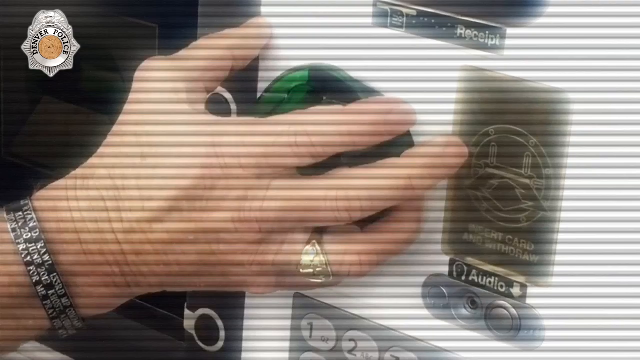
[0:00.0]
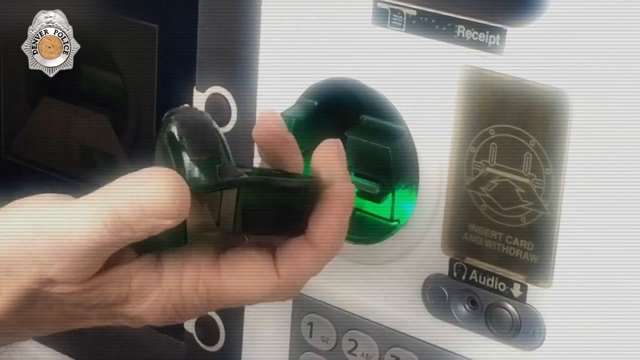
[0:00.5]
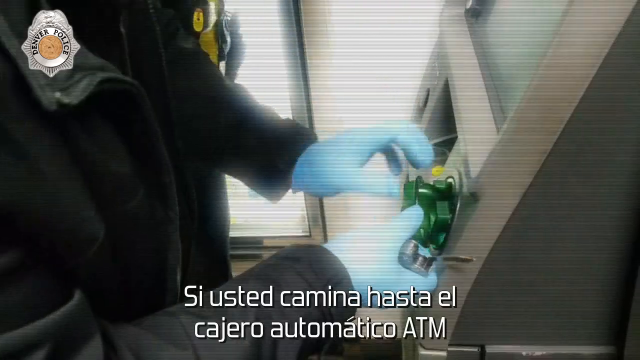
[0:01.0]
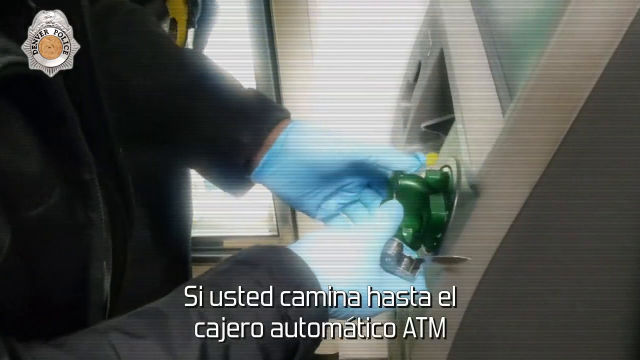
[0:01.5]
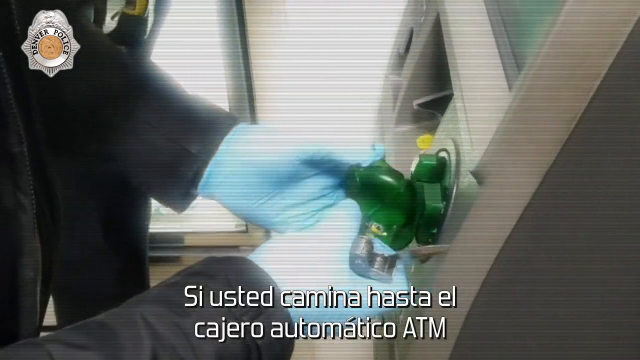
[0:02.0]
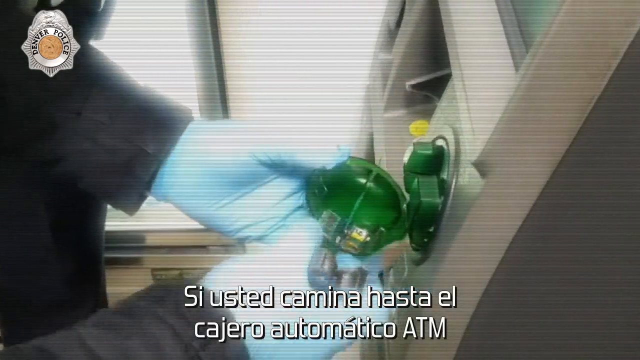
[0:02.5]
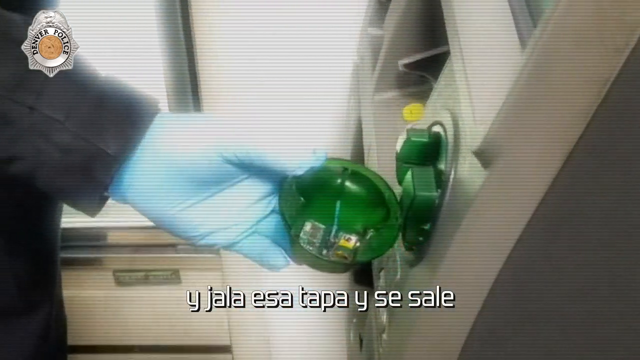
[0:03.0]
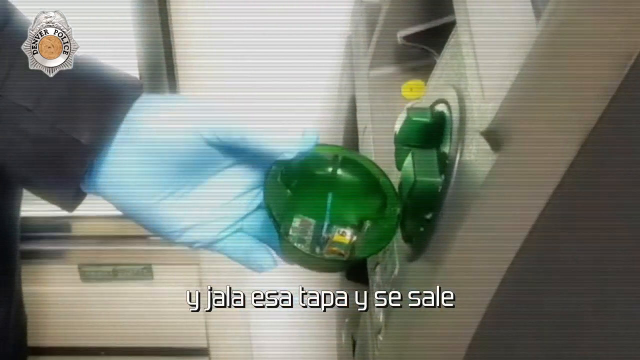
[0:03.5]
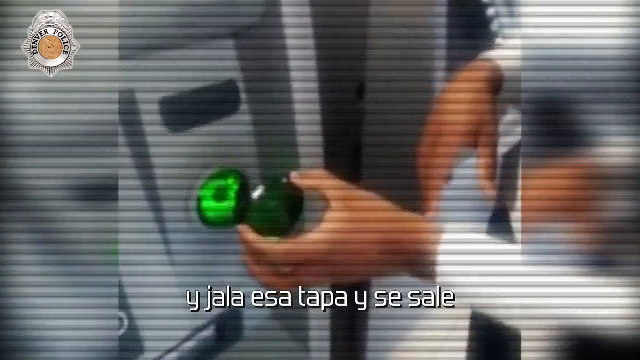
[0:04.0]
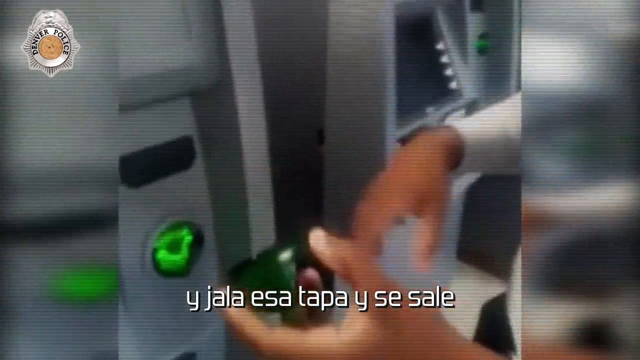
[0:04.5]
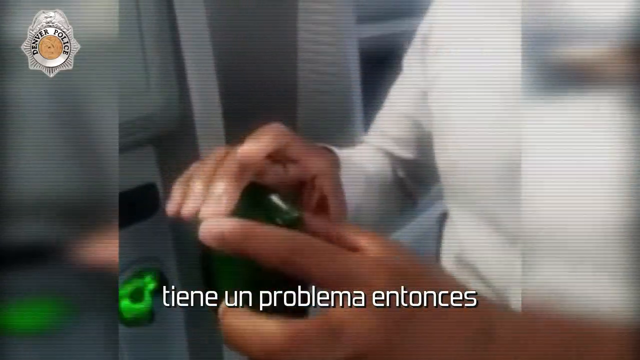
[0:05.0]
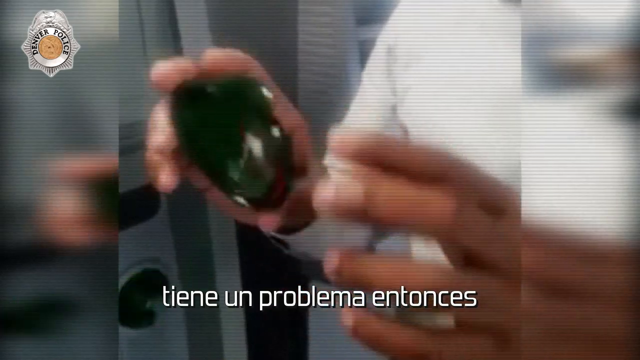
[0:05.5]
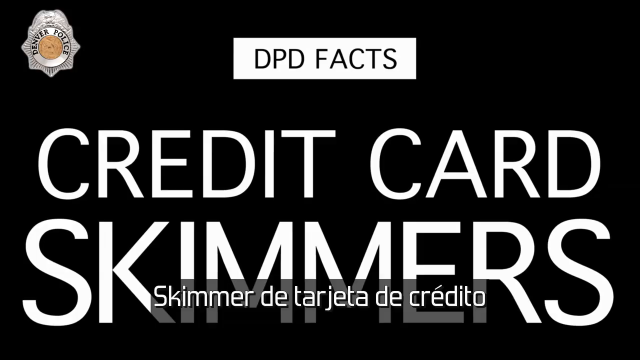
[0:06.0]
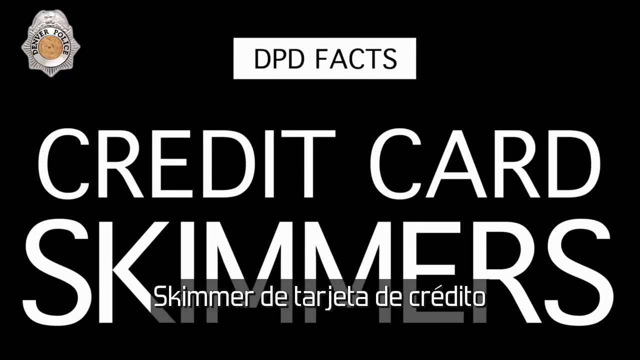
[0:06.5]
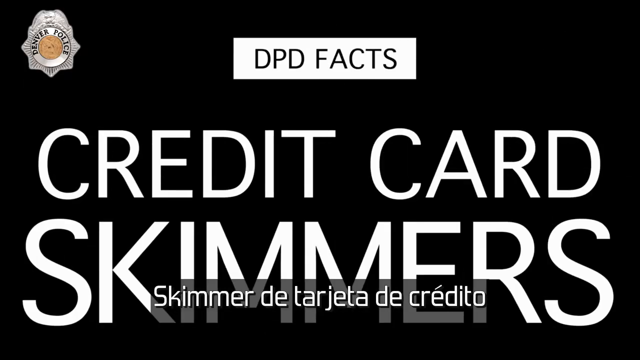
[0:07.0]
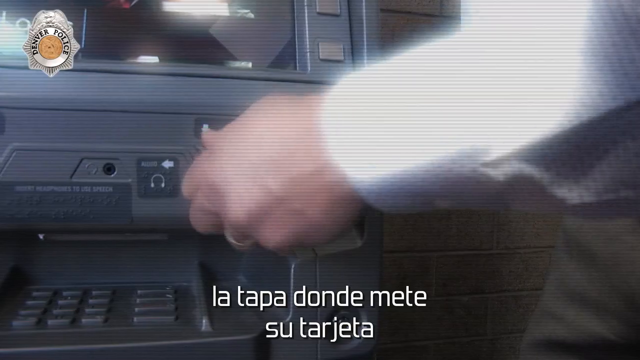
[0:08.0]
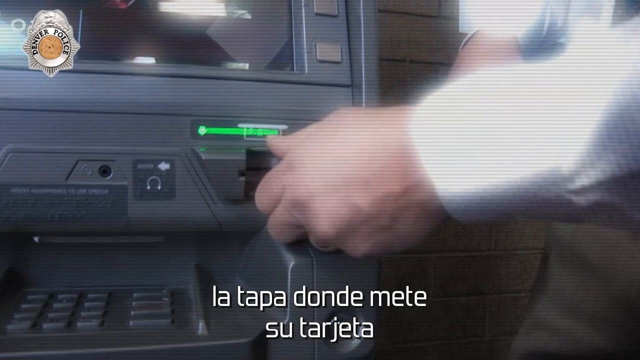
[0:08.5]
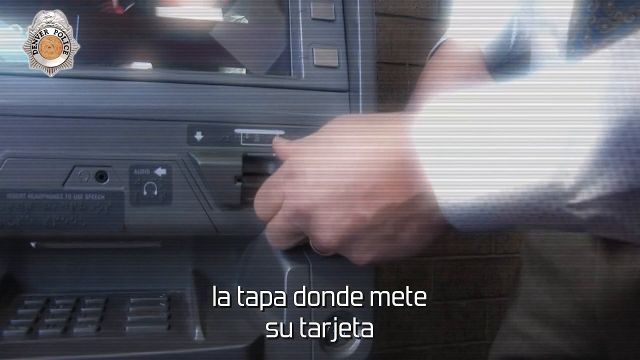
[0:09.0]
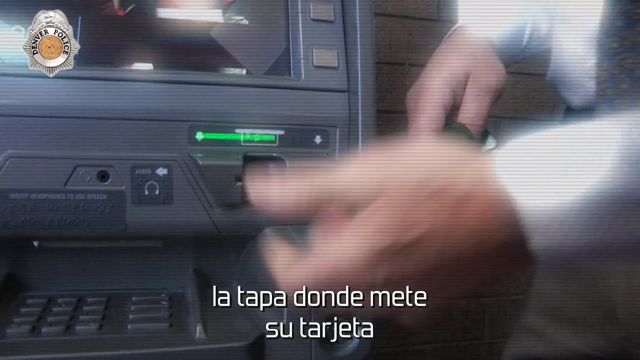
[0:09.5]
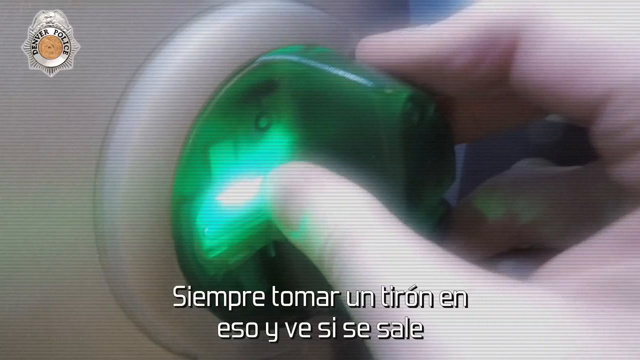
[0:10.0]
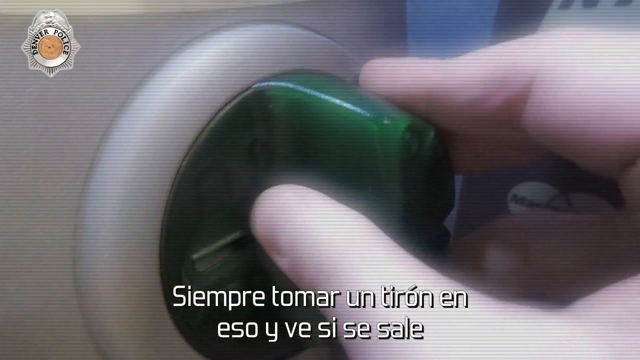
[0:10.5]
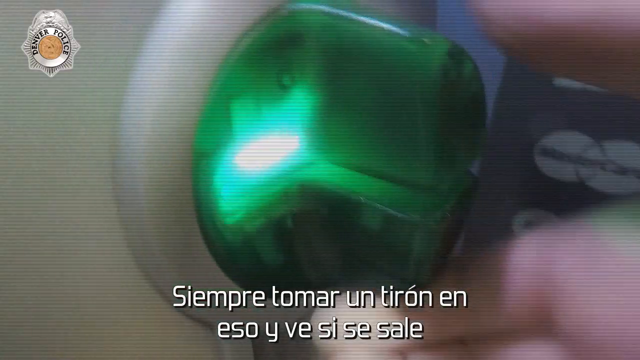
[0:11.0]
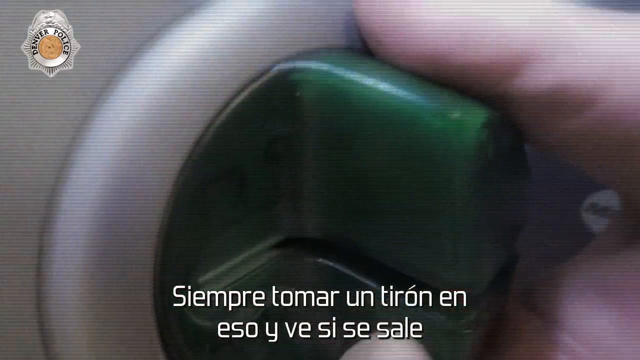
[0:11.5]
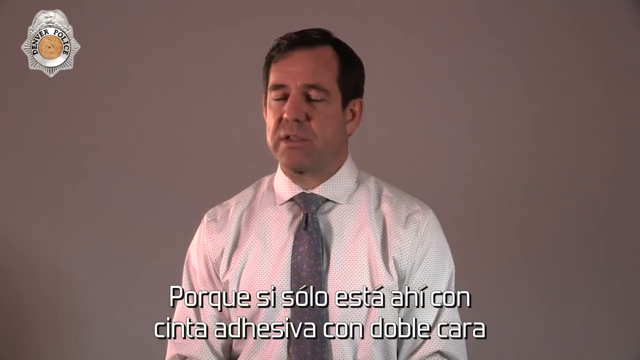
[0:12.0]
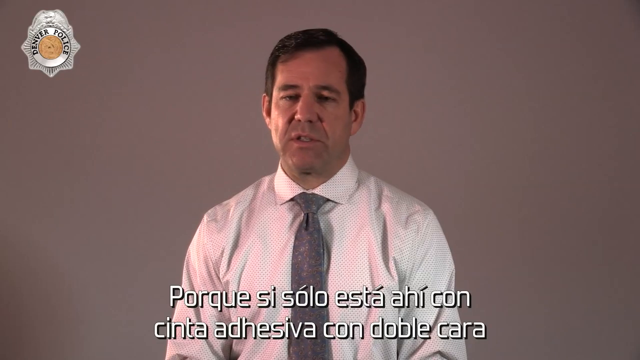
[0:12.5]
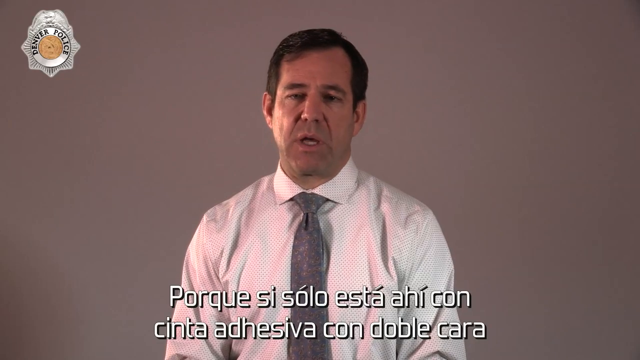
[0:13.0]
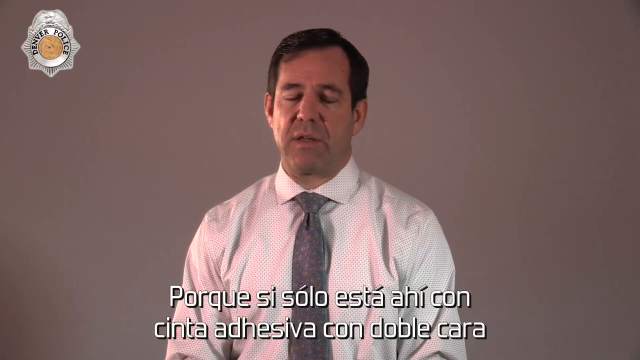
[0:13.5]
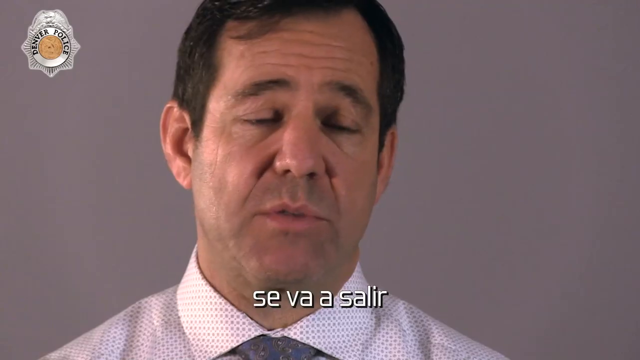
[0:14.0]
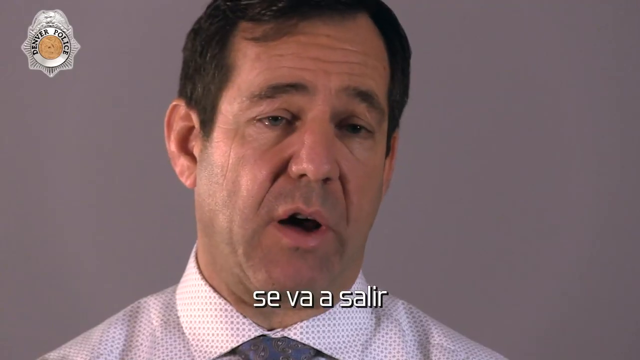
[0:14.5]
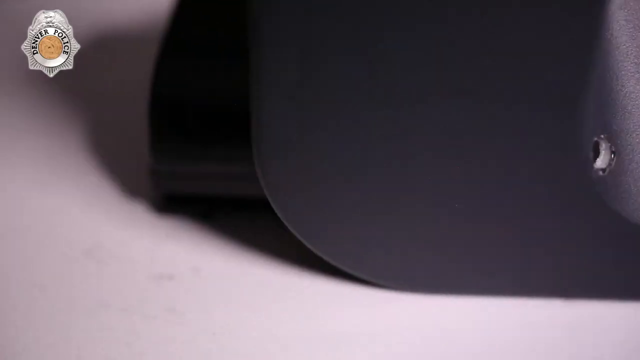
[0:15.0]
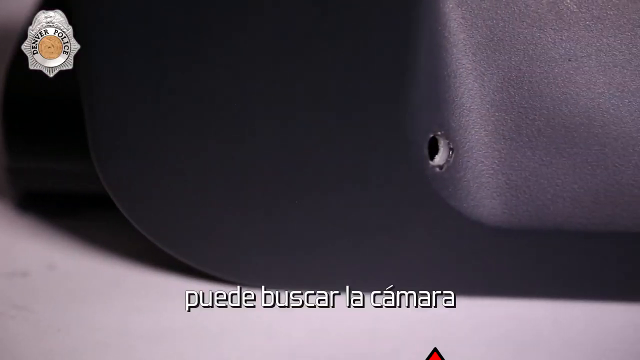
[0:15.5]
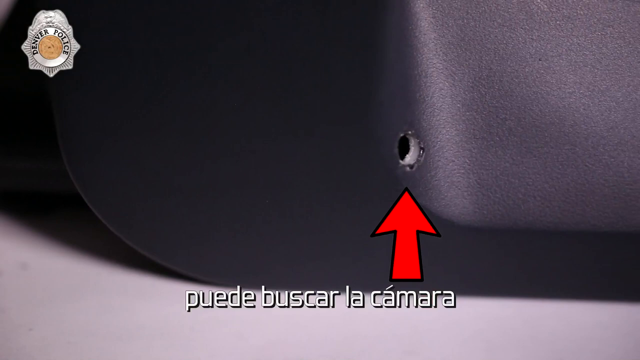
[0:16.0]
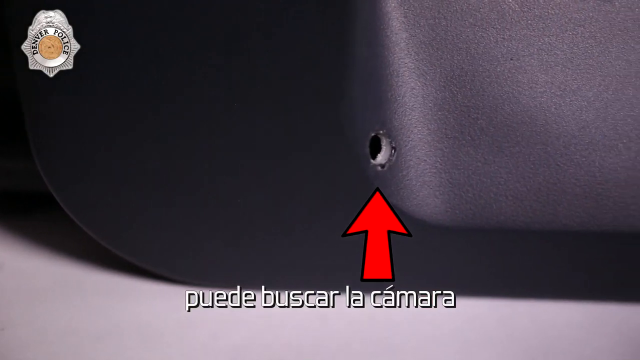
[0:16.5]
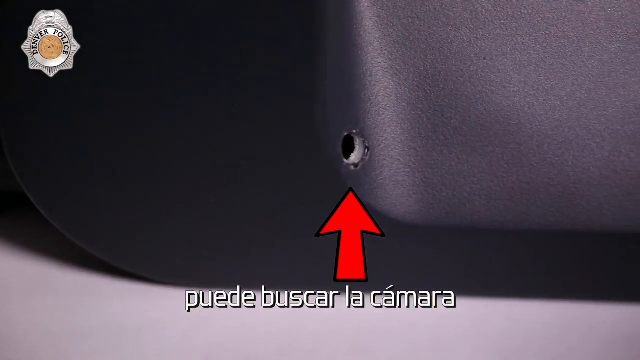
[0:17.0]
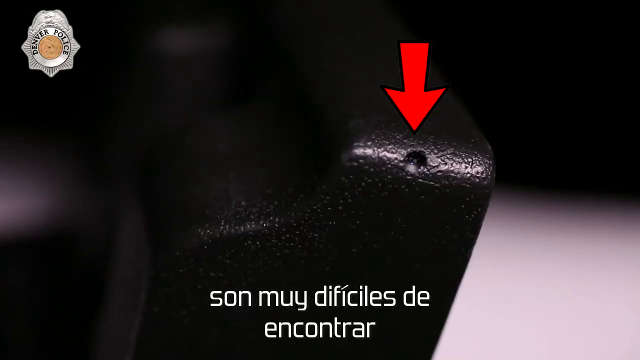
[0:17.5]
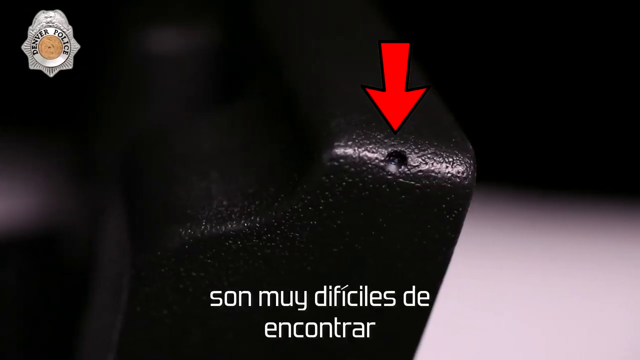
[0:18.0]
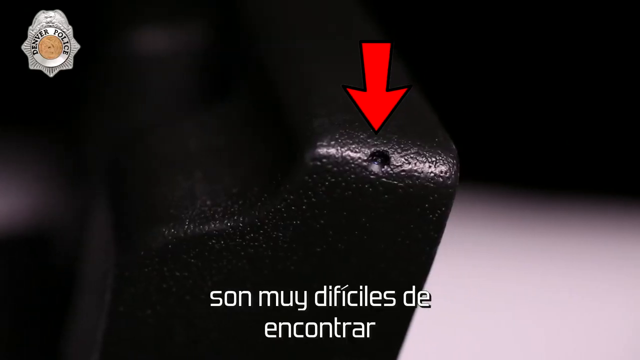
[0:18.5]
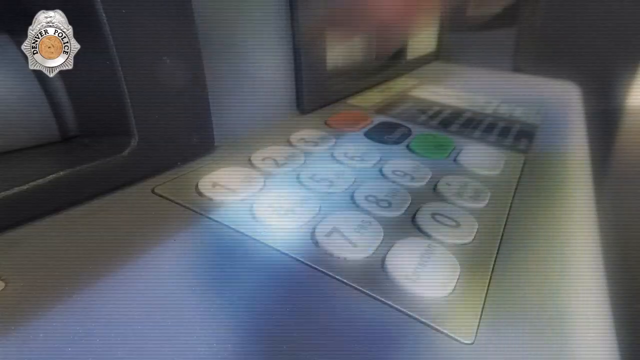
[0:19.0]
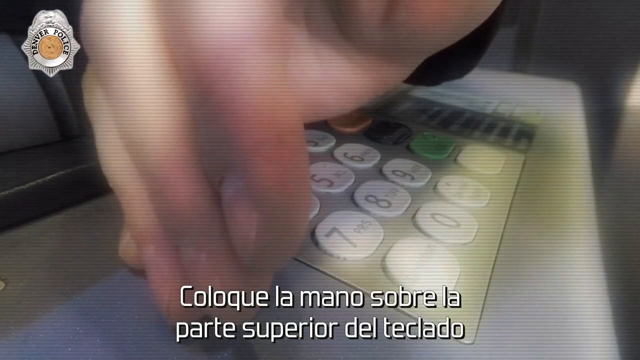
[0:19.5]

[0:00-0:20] The video concerns credit card skimmers and the criminals who install them. A man in blue gloves, who looks like a criminal, takes apart an ATM and puts a skimmer into it. His face is not visible, only his hands, and there are flashing lights. The video shows how this is done and gives information on preventing fraud. The criminal uses a knife to pry off part of the ATM to put the skimmer in. A middle-aged man in a suit talks about skimming. Text says "use your hand to hide your PIN number when you get out cash to protect yourself."